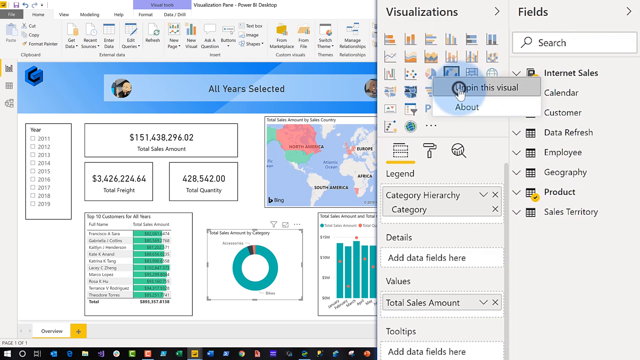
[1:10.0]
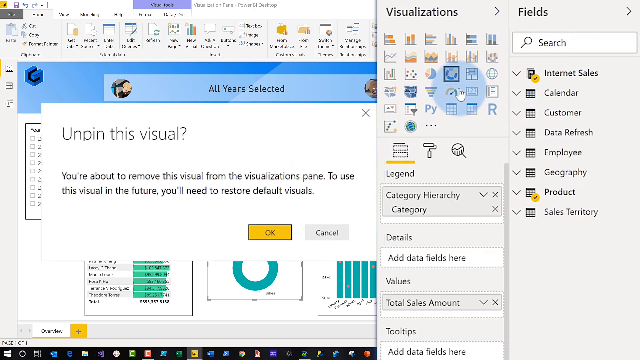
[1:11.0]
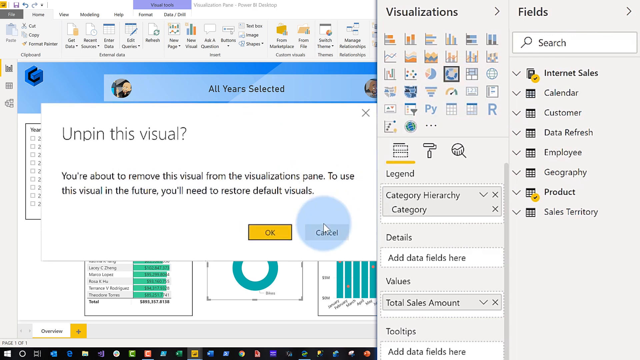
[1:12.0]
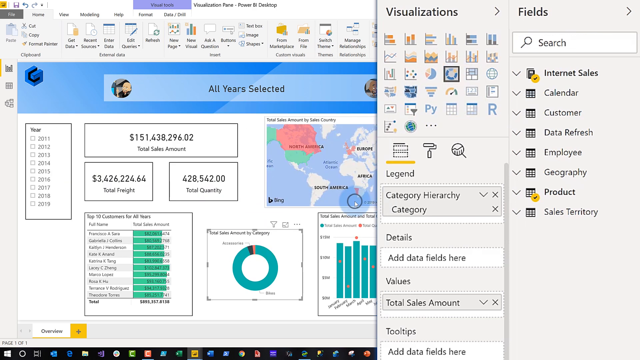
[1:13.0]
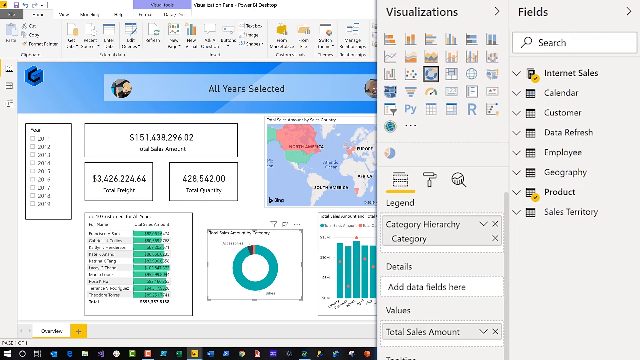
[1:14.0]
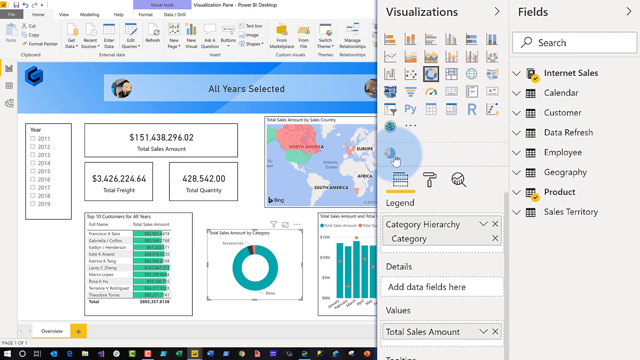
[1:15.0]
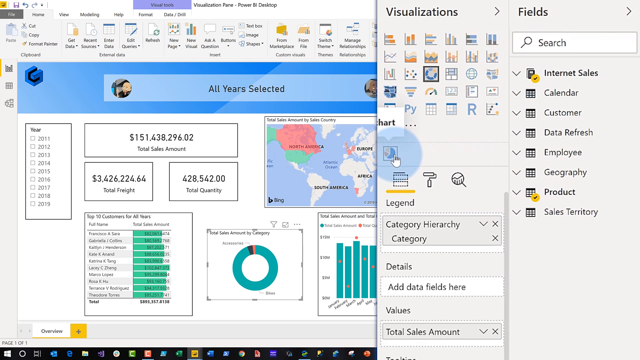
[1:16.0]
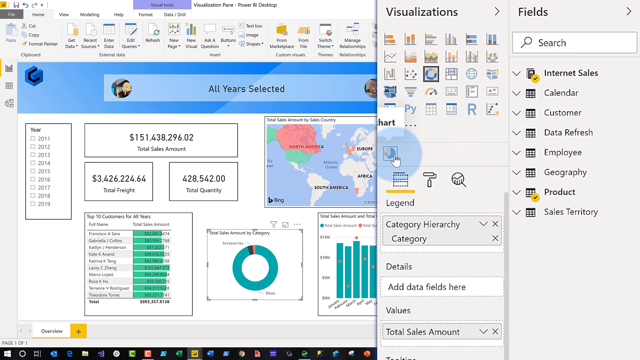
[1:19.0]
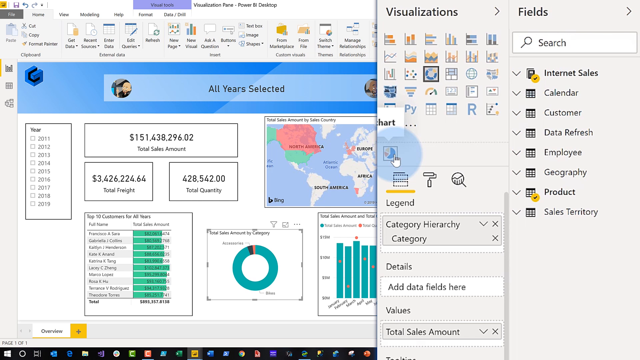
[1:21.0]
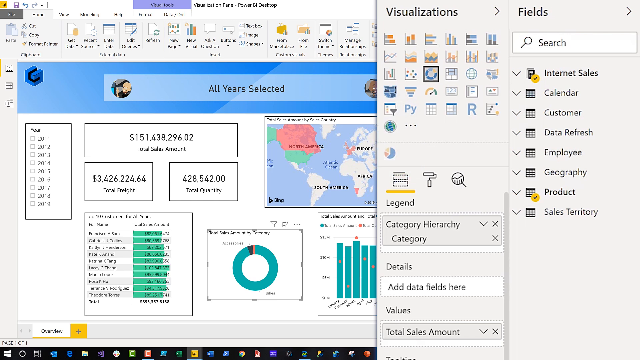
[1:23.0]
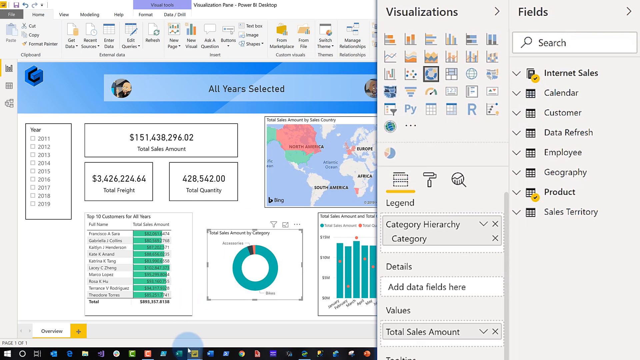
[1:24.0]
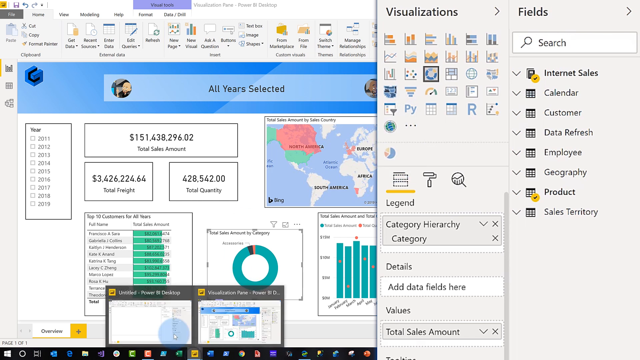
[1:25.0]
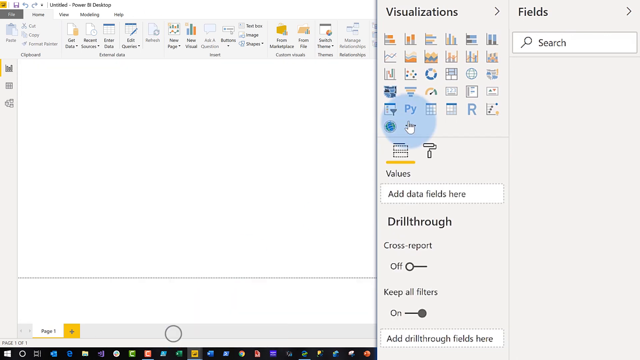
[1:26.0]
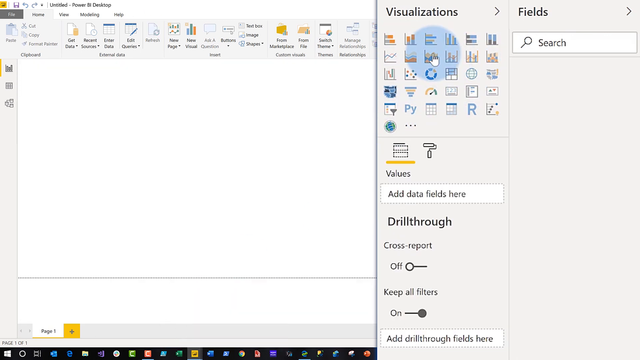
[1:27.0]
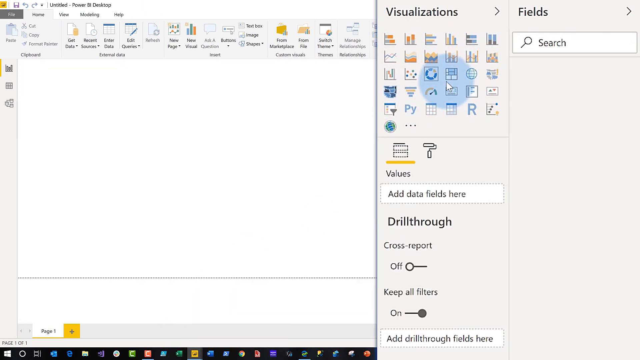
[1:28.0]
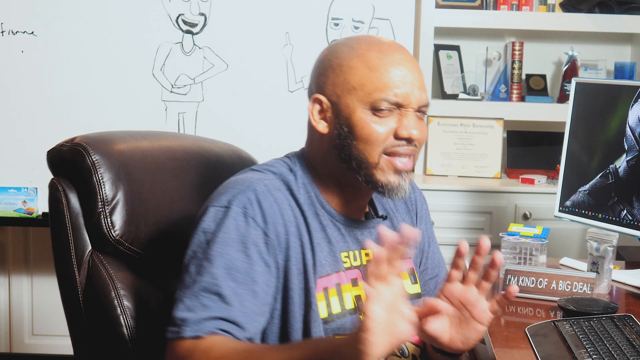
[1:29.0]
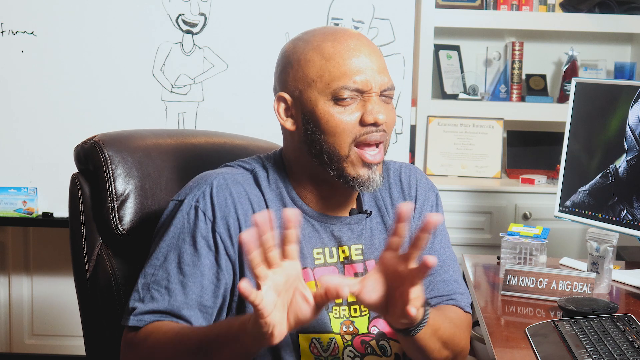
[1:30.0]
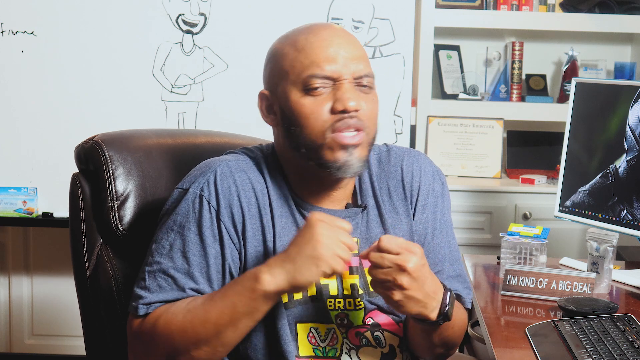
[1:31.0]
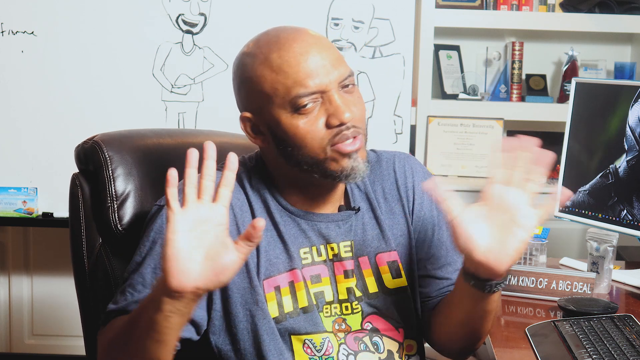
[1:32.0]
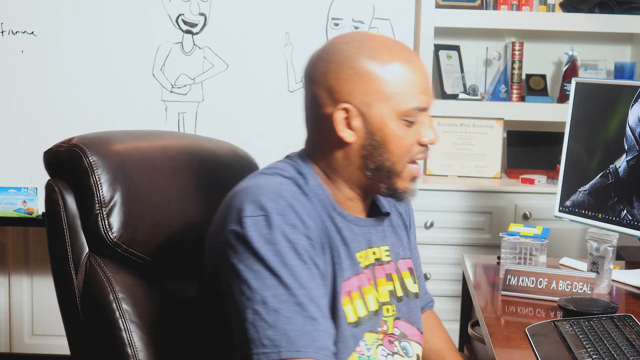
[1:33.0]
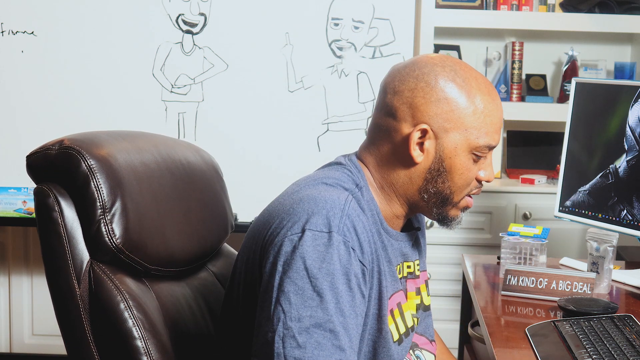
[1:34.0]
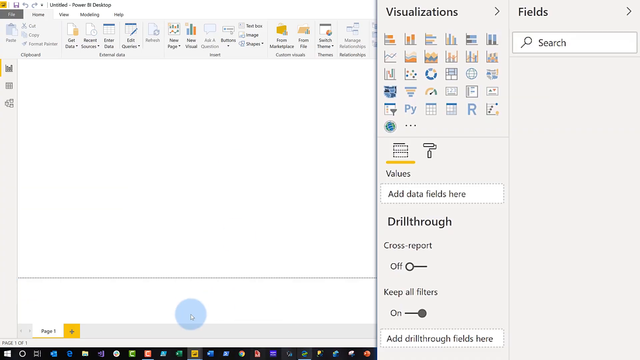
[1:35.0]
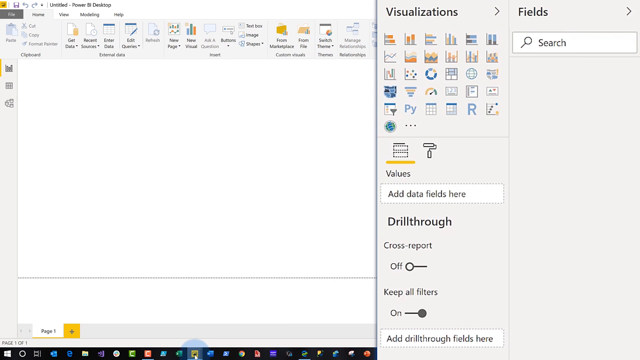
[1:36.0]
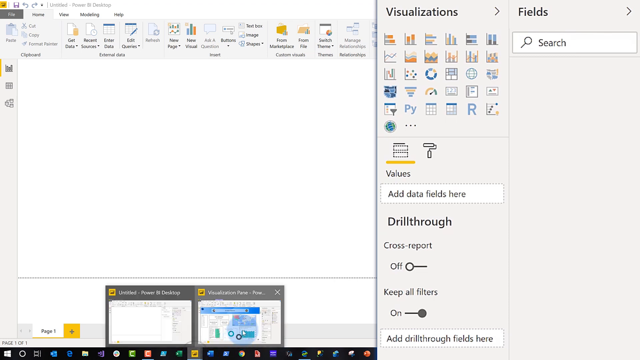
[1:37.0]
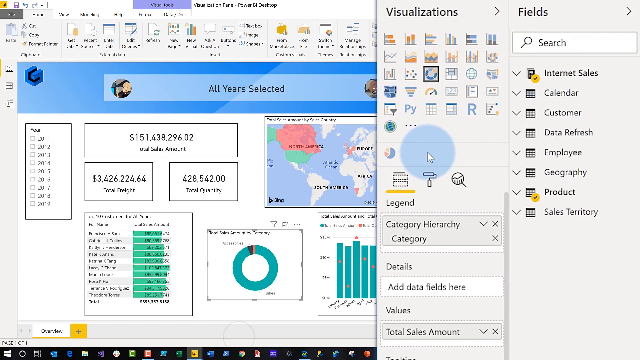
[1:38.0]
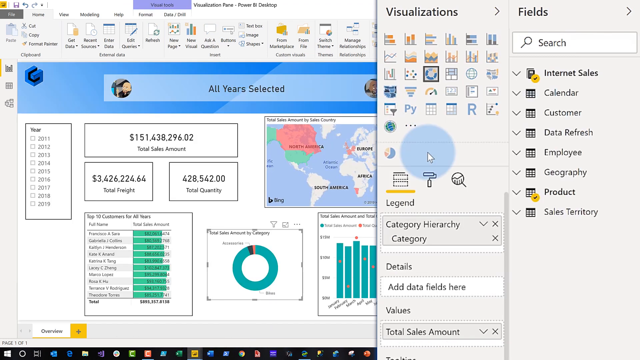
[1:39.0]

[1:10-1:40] A pop-up reads "unpin this visual," with black text below saying "you're about to remove this visual from the visualizations panel to use this visual in the future you'll need to restore." He clicks the OK button, and the visual appears to be removed from the visualizations table, now in a separate section below. He clicks on it, where it says "chart," and hovers over it with his cursor and blue circle, showing how to move it out of the visualizations options into its own category. What looks like another window pops up that is just a blank screen, and he hovers over the visualizations table of 30 options.